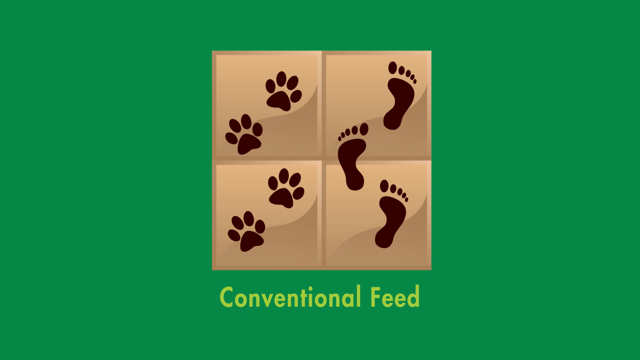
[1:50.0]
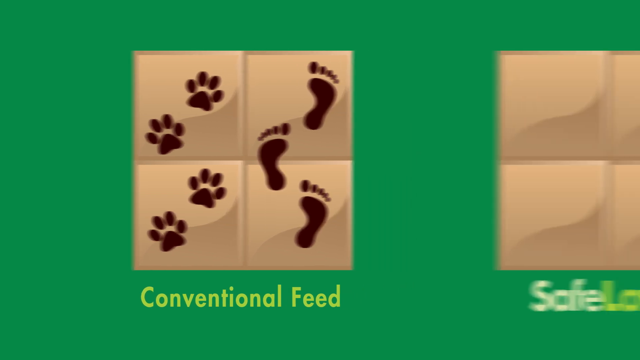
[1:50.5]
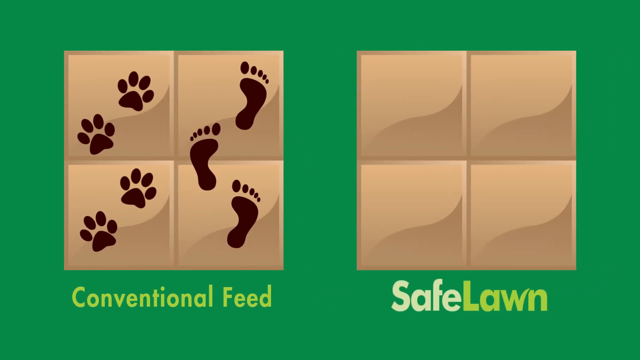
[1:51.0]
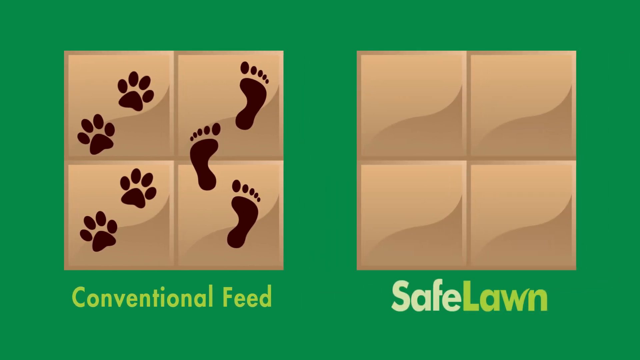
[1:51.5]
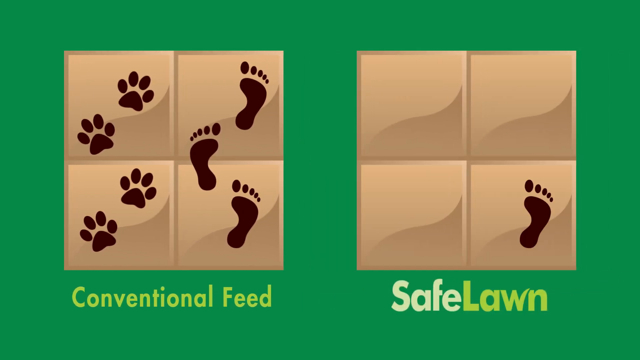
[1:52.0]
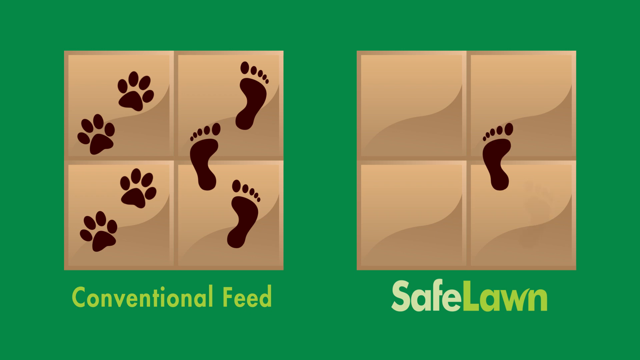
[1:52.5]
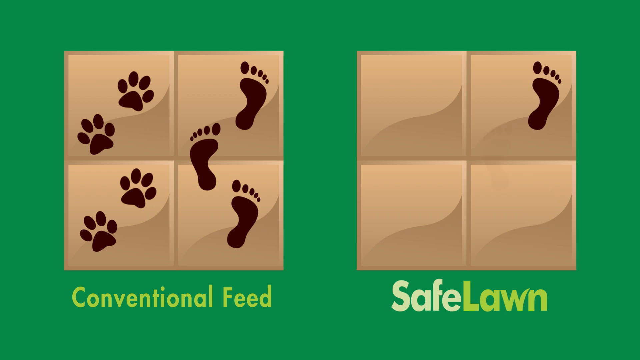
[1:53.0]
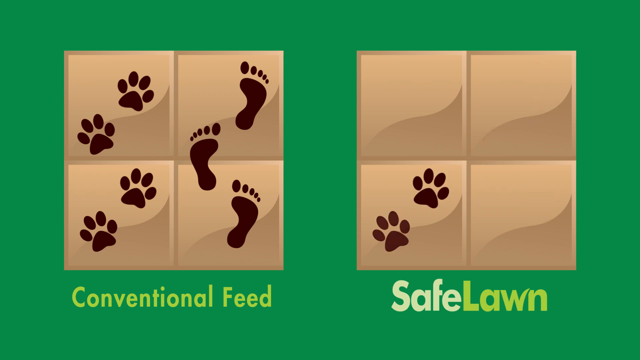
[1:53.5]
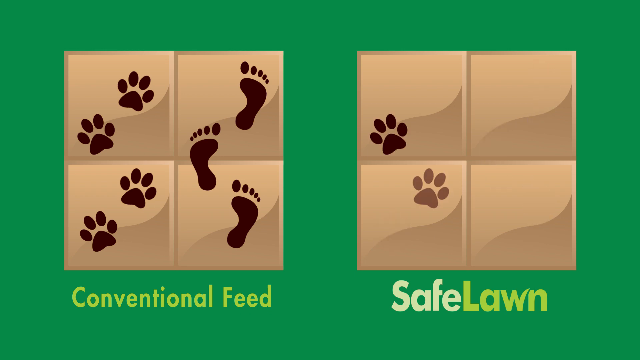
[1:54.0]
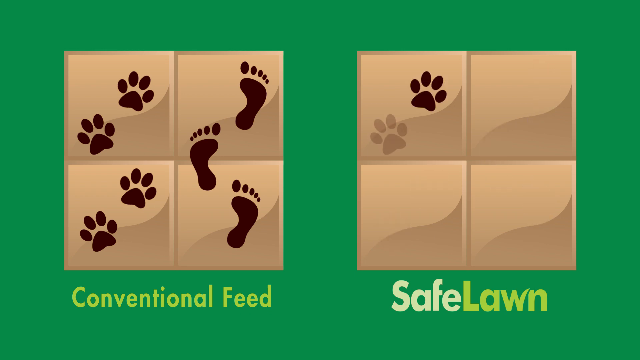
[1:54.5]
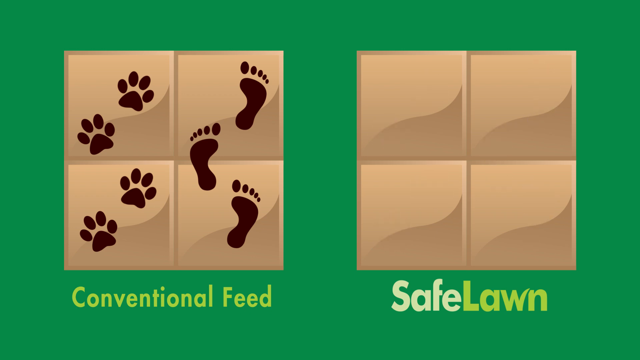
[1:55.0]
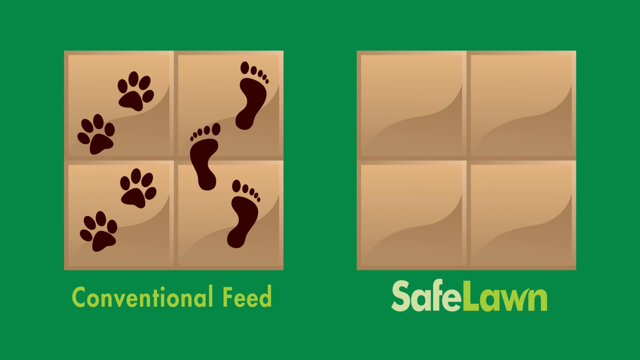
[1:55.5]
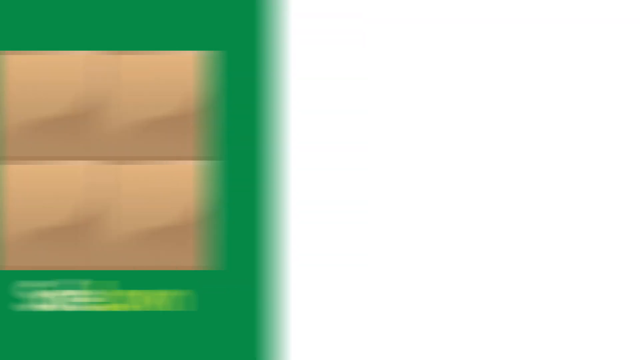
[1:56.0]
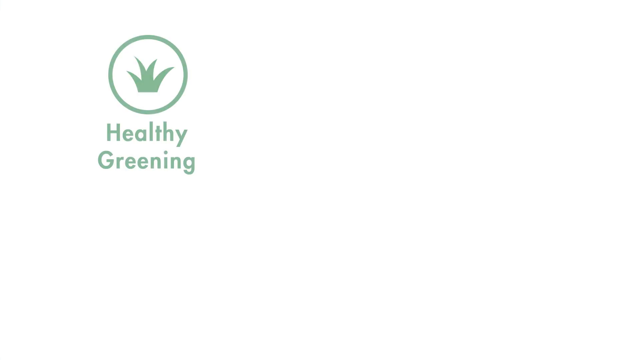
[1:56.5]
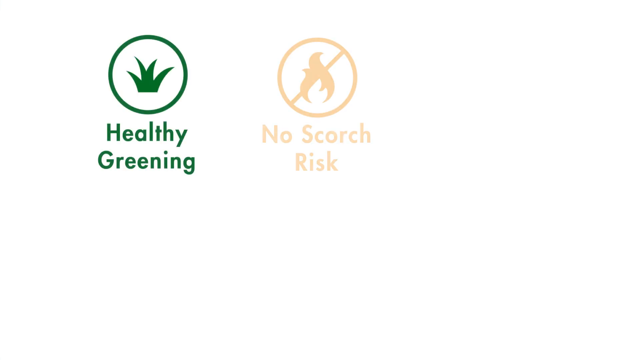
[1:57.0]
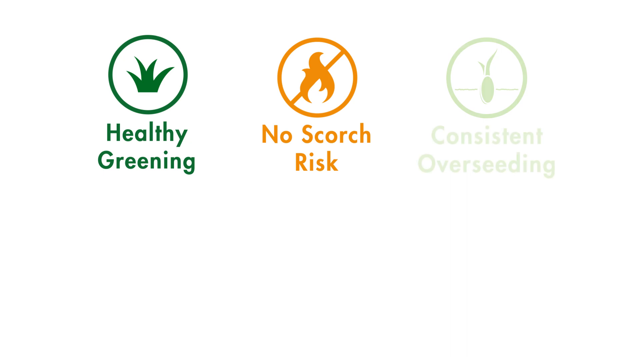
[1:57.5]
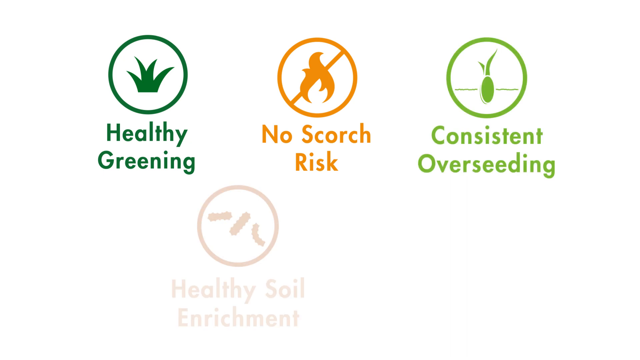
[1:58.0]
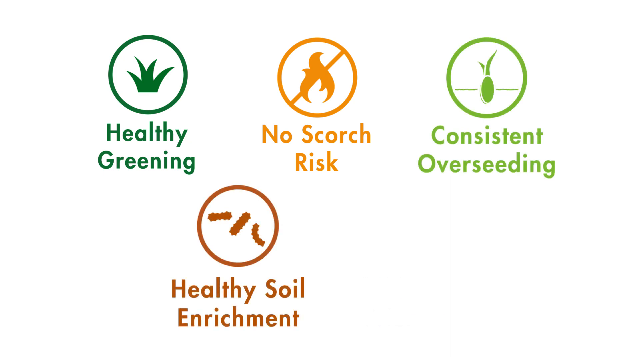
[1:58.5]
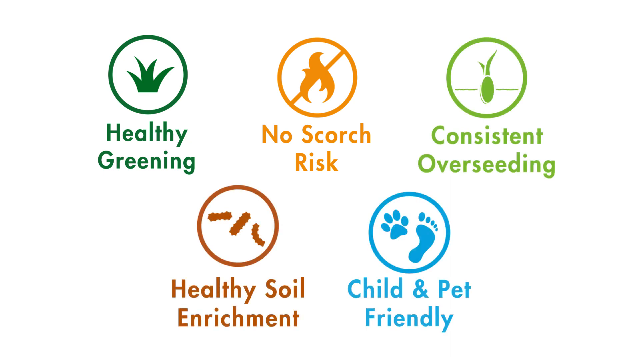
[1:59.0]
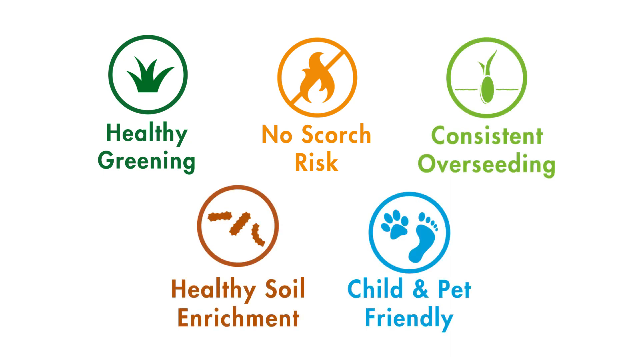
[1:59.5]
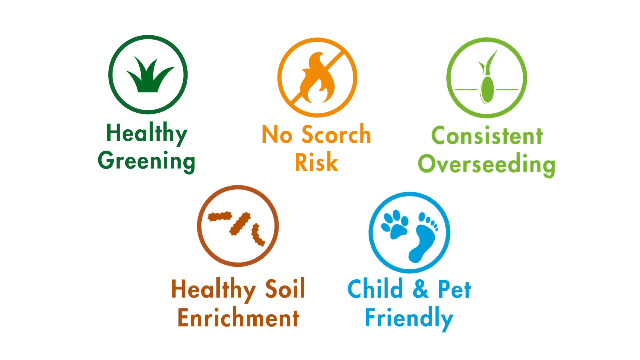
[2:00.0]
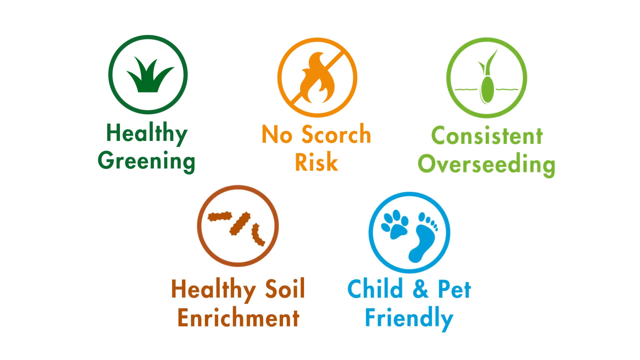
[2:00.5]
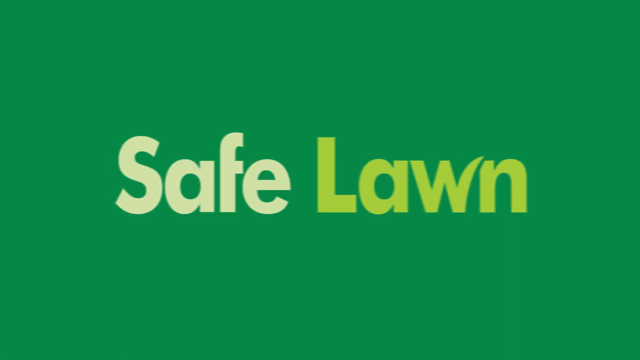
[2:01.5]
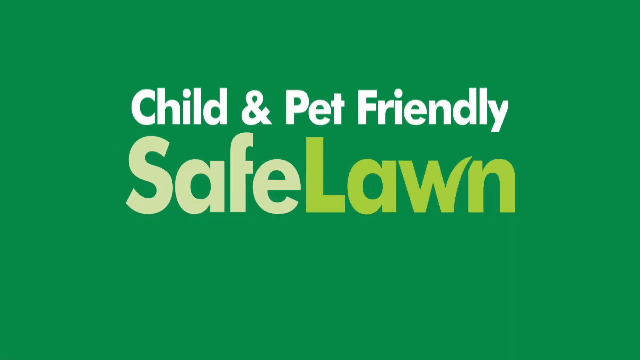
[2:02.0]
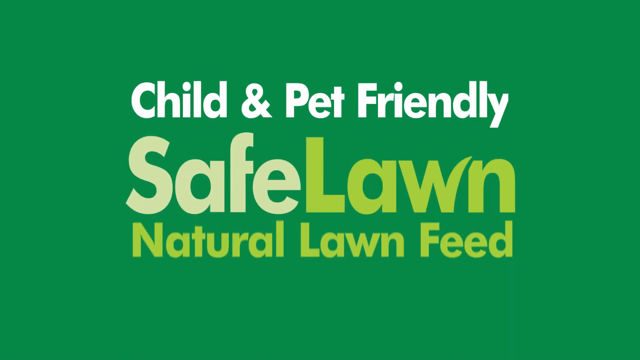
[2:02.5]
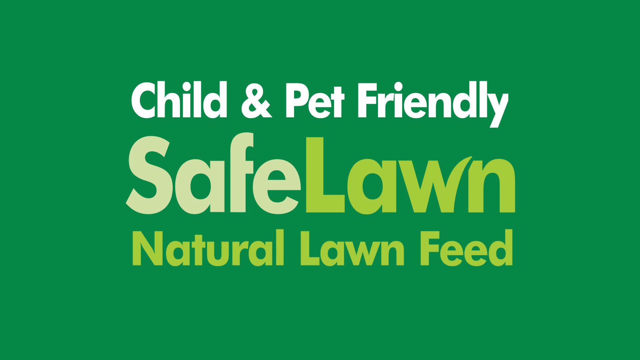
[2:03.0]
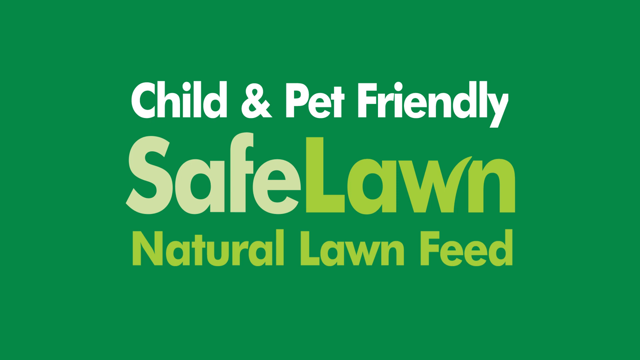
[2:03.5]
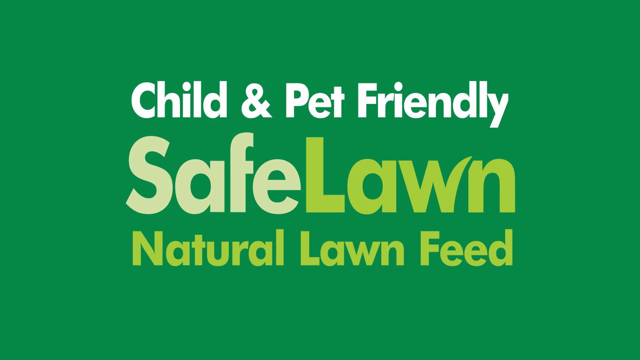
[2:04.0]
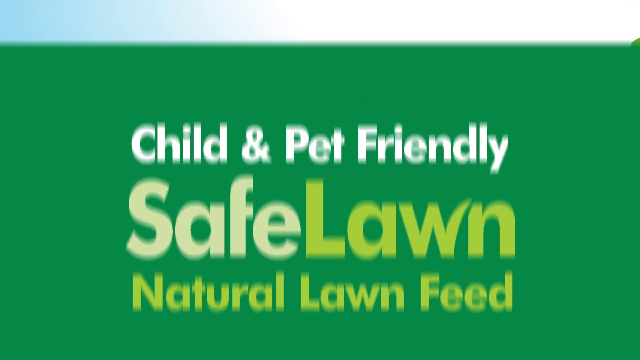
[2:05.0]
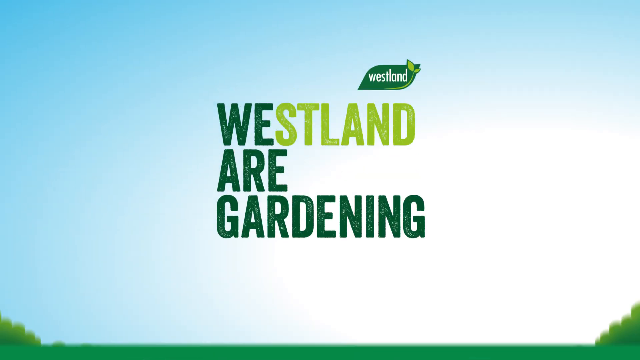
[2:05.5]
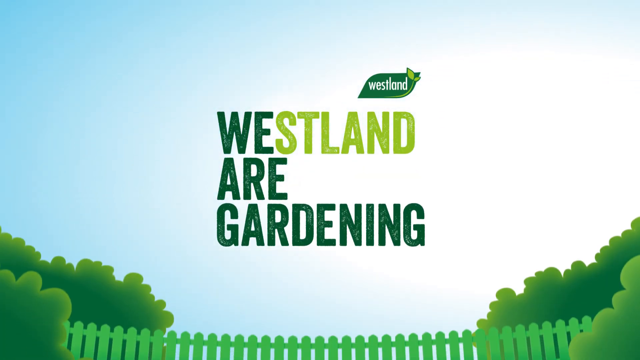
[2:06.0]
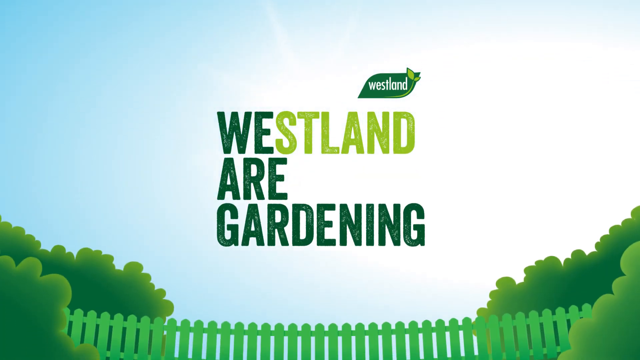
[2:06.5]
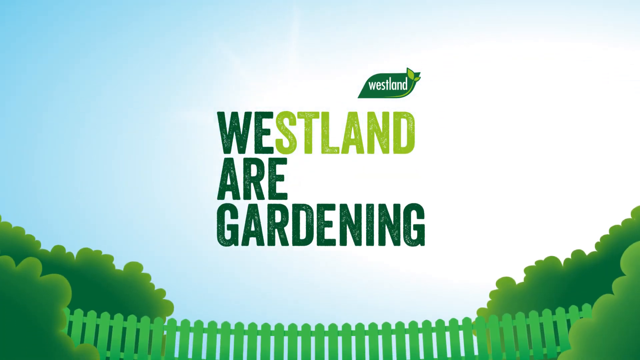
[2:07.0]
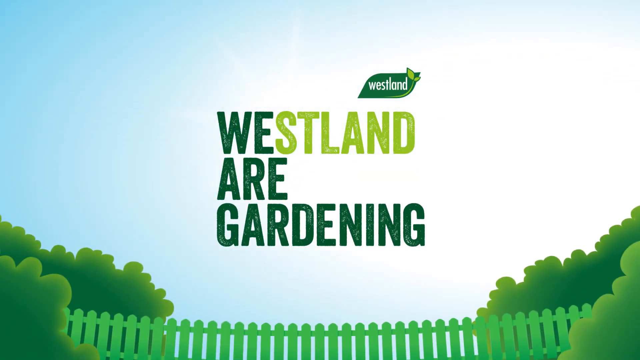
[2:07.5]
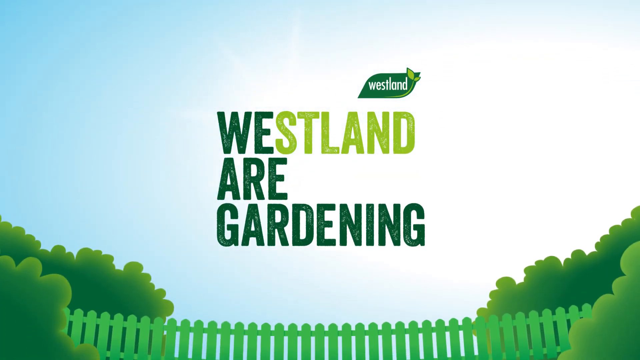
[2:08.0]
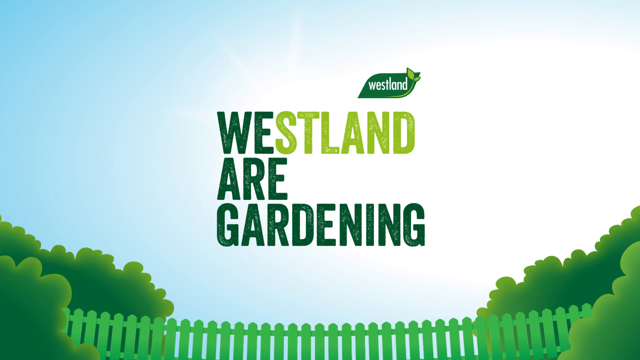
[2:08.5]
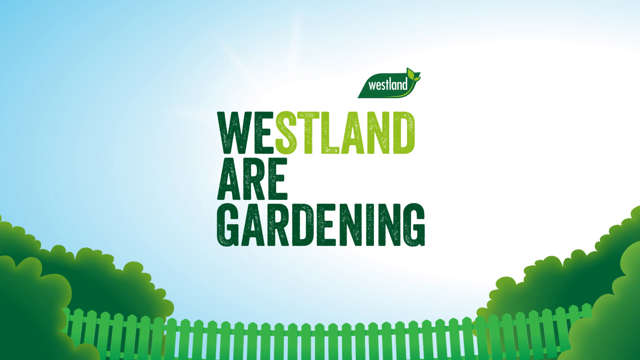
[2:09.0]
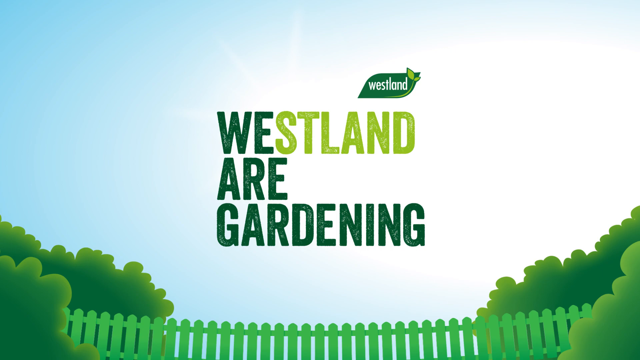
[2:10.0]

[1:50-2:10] A list reads "healthy greening, no risks, no scorch risk, consistent over seeding, healthy soil enrichment, child and pet friendly," all presented as coming with natural and safe feed for the lawn.